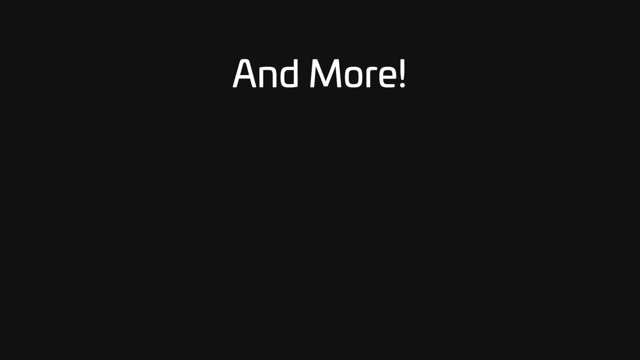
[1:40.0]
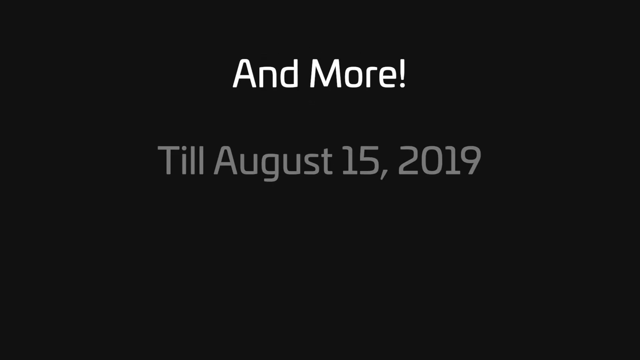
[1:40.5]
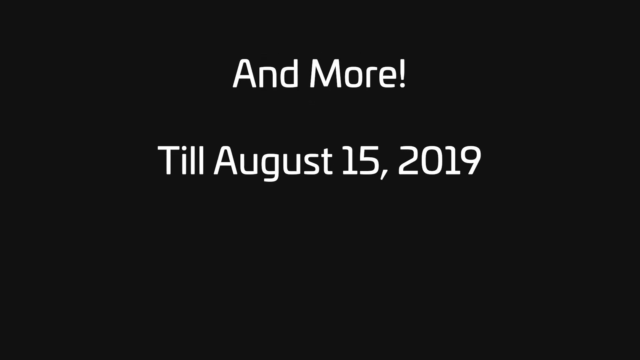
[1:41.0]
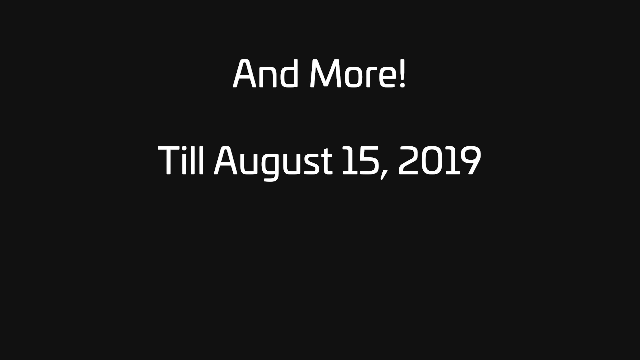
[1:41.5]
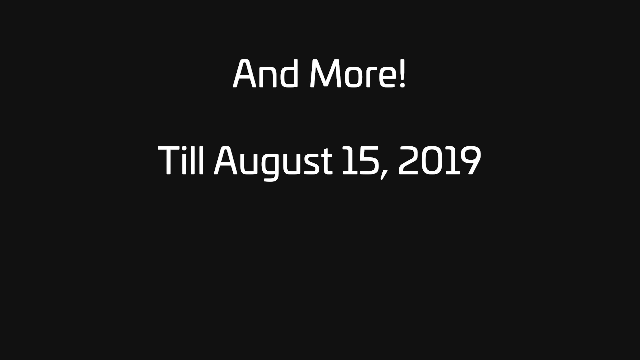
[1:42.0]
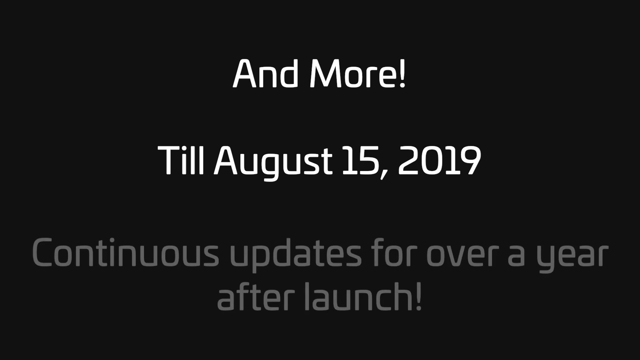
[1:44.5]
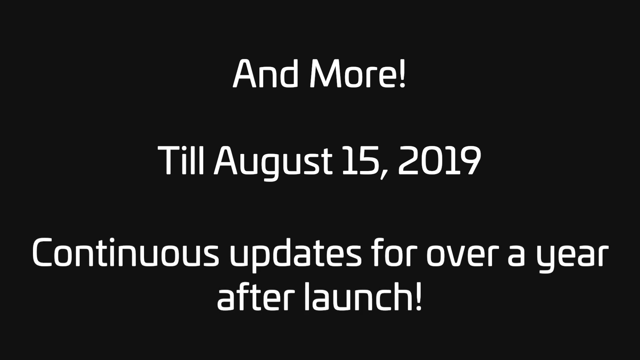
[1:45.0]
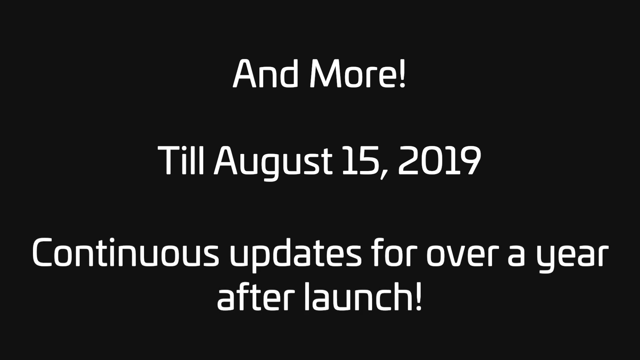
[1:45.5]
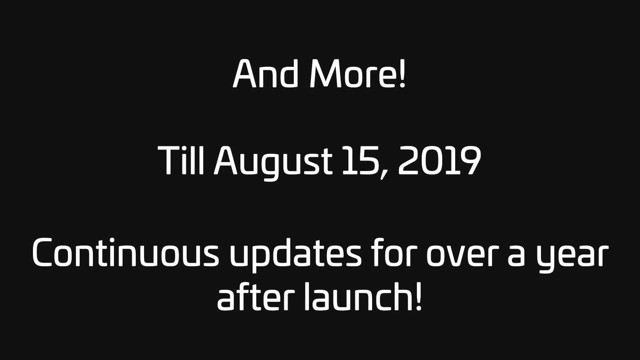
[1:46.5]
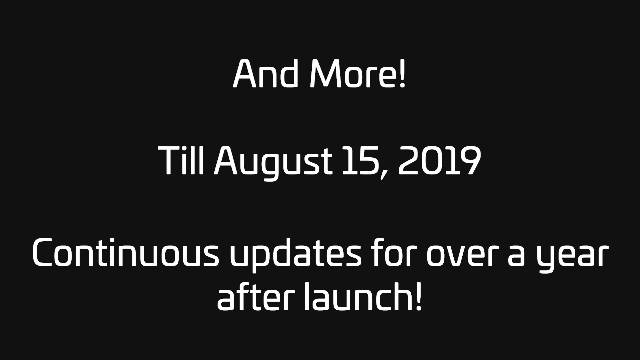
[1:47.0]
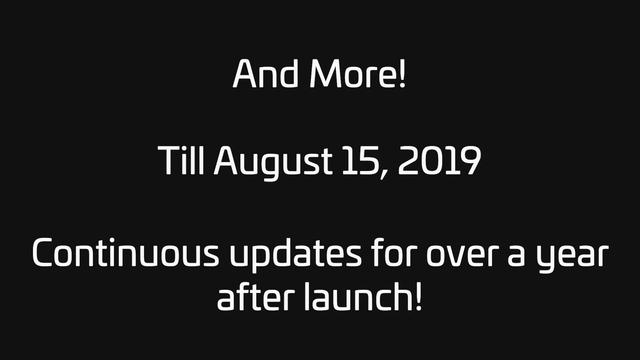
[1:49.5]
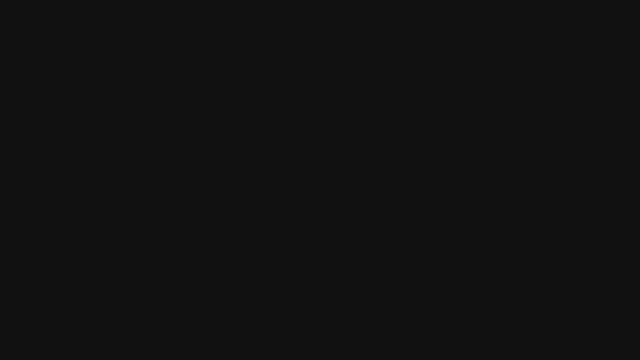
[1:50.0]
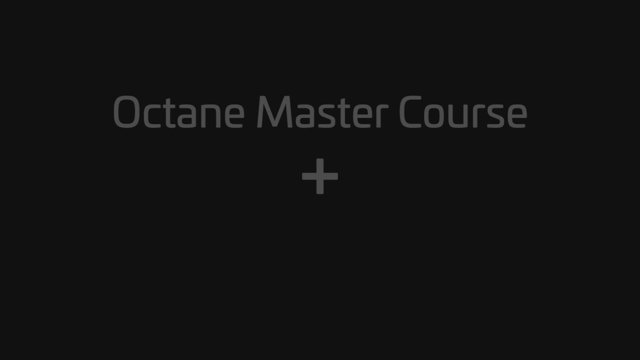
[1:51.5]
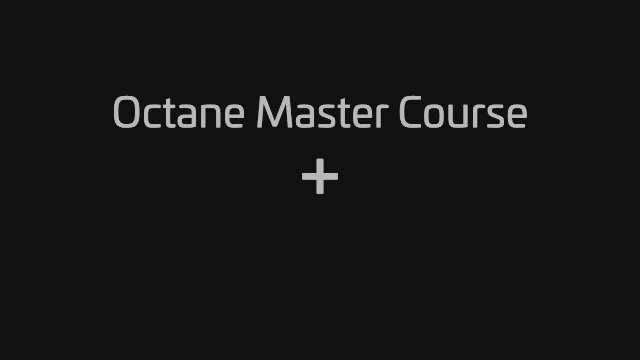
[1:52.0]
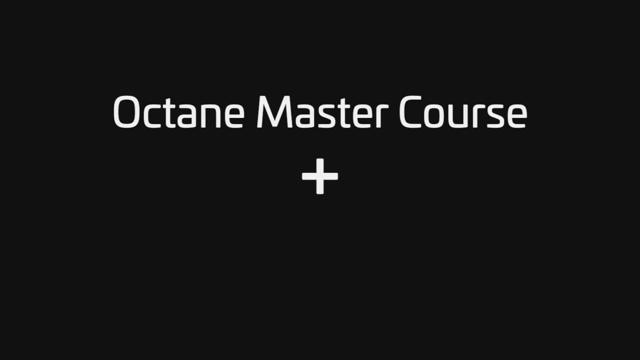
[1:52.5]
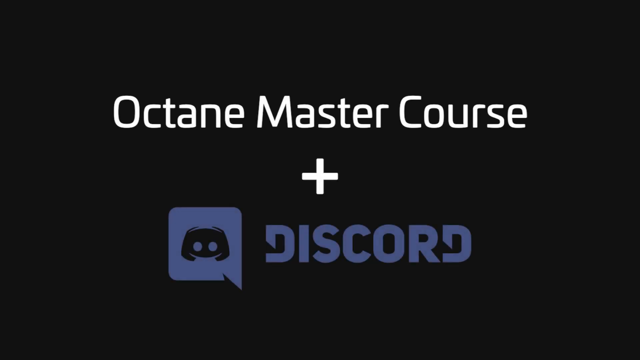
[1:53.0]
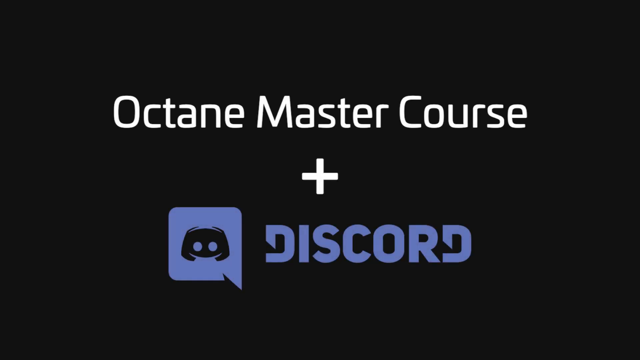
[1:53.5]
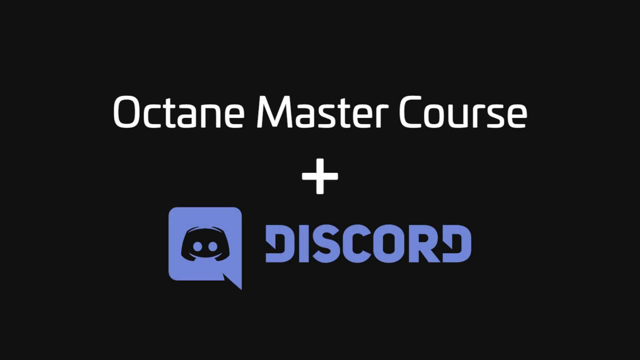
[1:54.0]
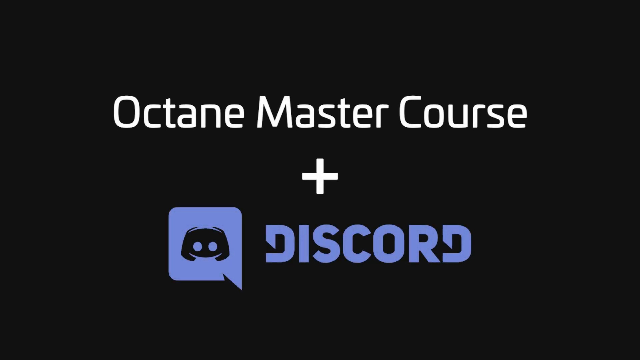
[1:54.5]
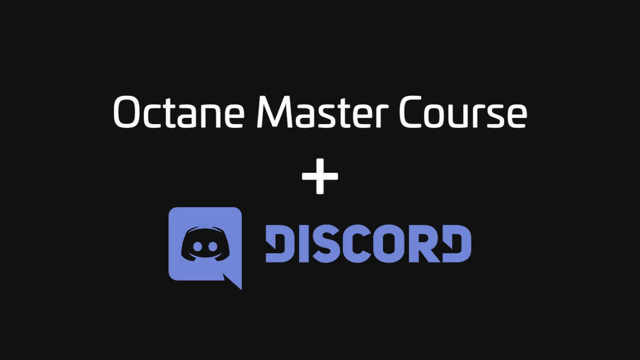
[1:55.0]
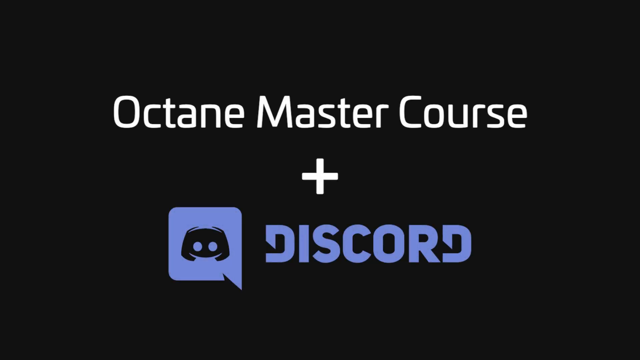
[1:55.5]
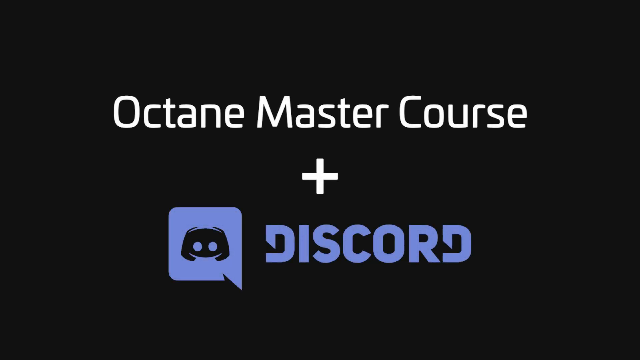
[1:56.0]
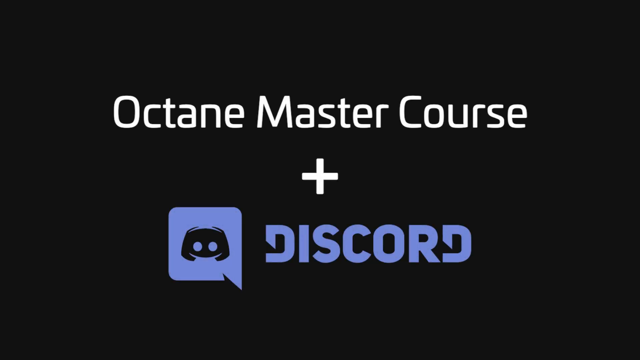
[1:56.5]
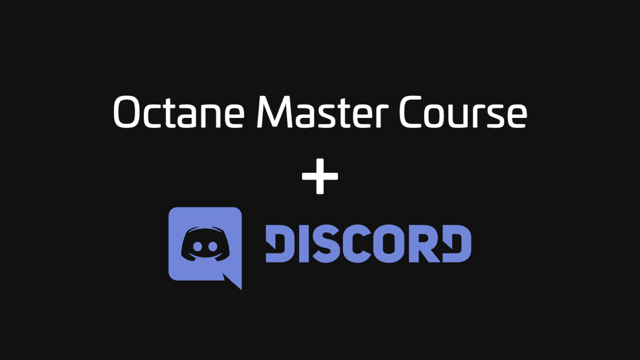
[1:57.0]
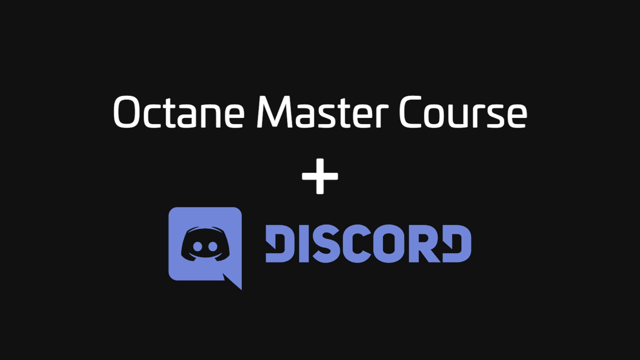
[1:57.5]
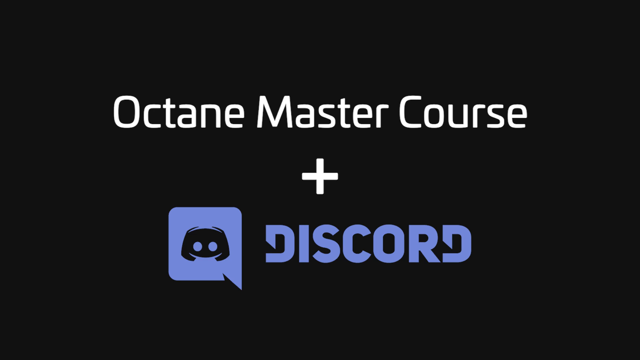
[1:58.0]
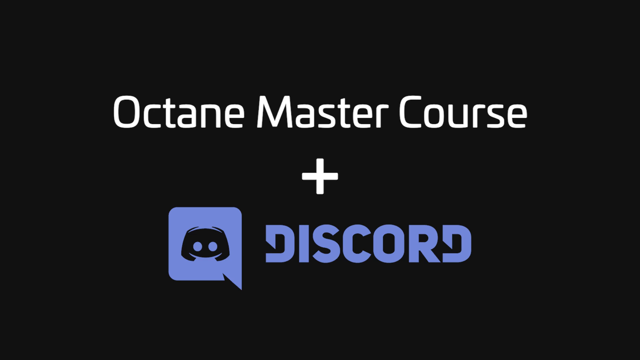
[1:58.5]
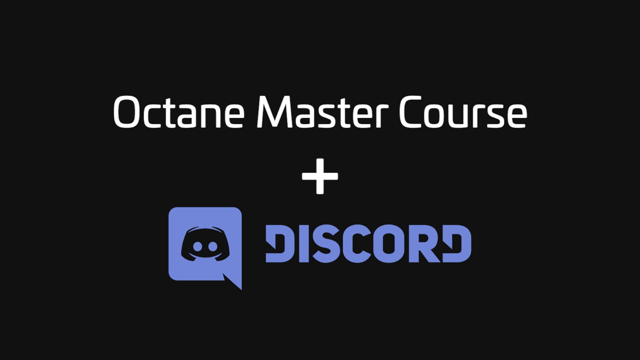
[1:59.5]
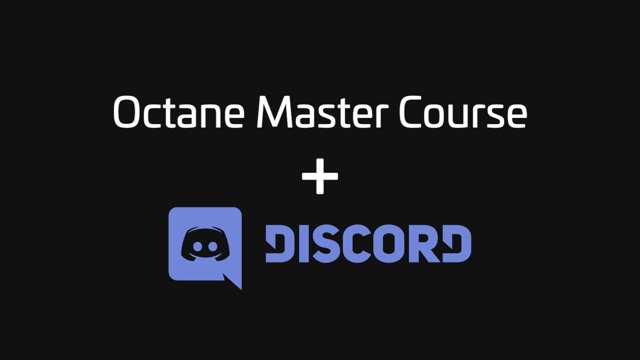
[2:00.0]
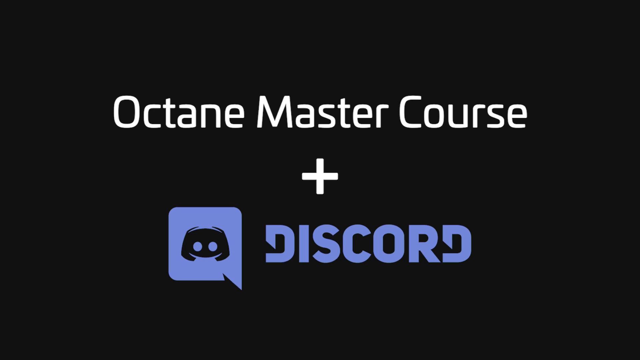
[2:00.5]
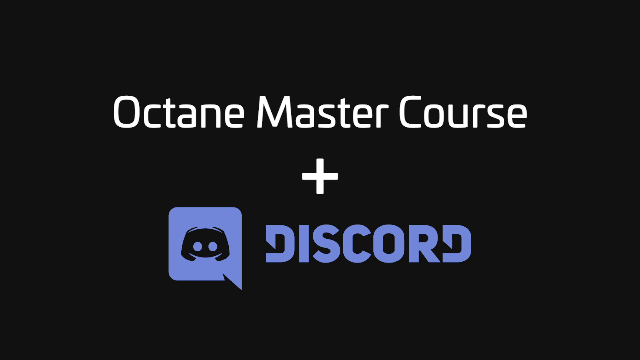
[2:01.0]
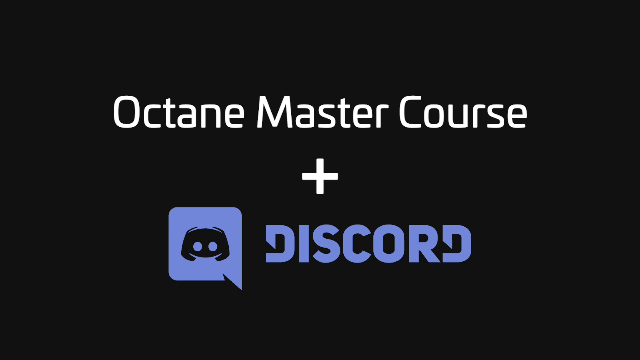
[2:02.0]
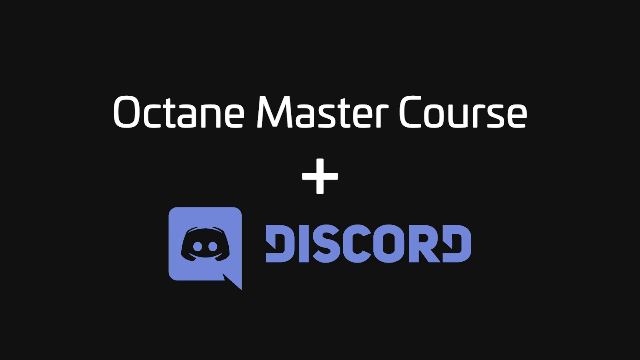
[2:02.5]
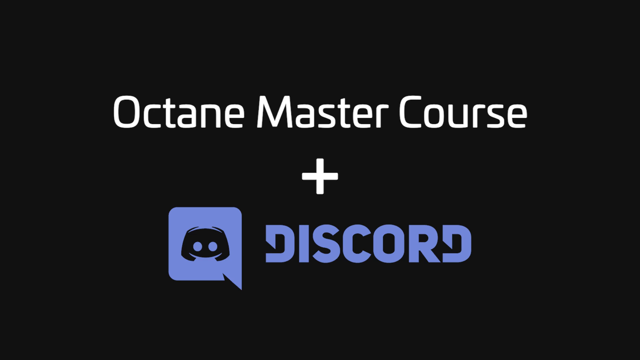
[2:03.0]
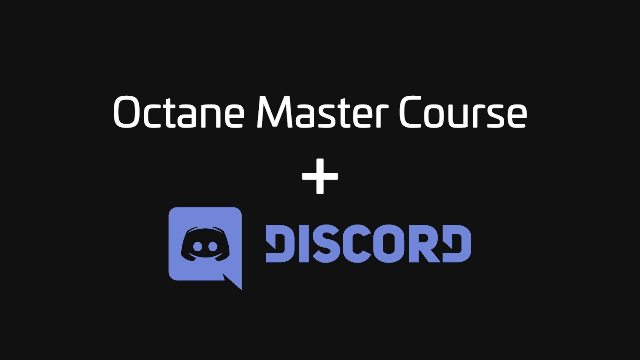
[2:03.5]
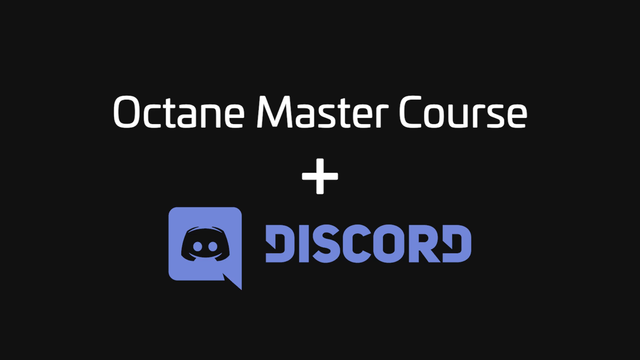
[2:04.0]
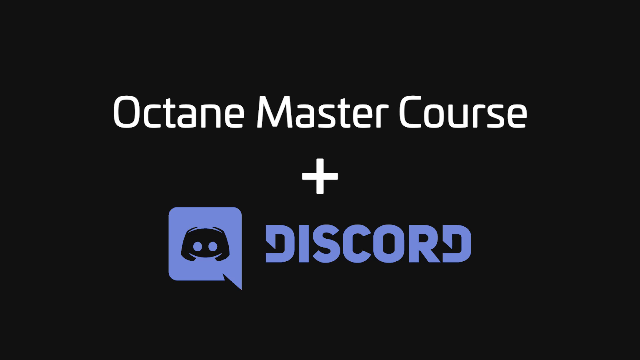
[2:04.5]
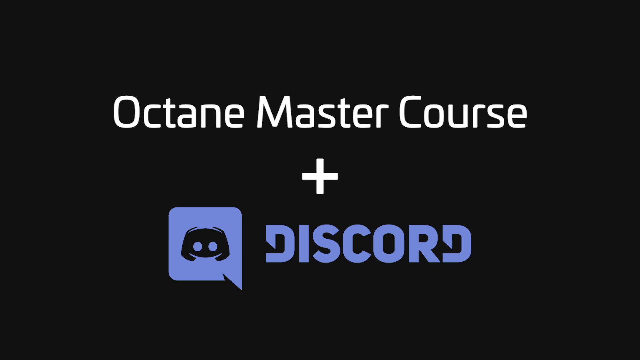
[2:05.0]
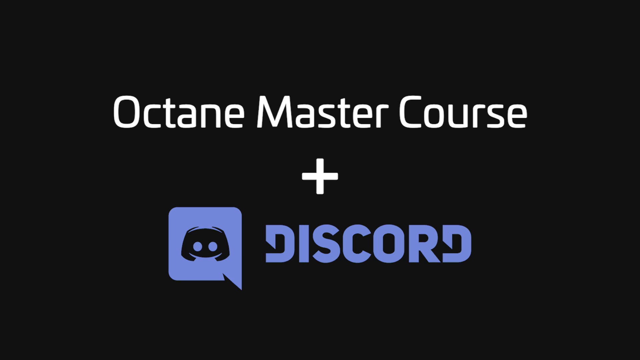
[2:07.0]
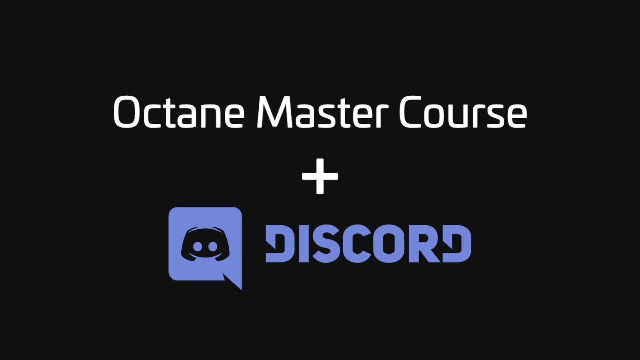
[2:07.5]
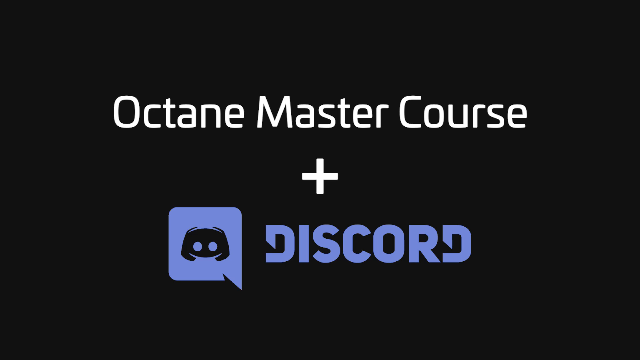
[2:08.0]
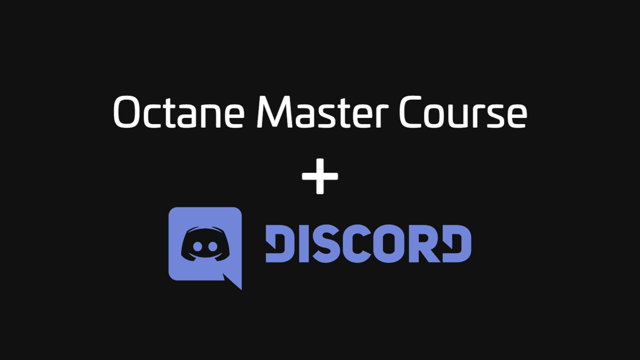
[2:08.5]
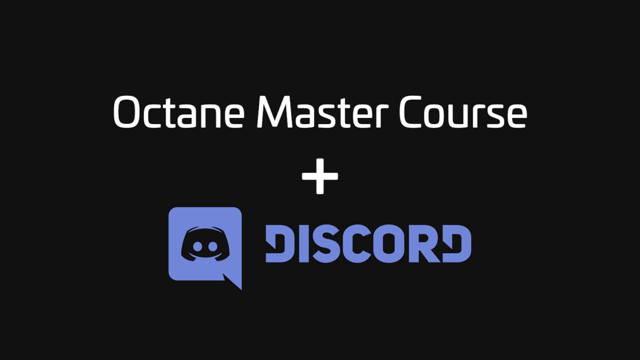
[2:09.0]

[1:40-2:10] On the dark gray background, "till August 15th 2019" appears underneath "and more". More white text then appears at the bottom, reading "continuous updates for over a year after launch". The screen turns fully dark gray, and the words "Octane Master Course" appear at the top with a plus symbol underneath, followed by the Discord logo below that. The word Discord is in the font used for the application, with the Discord speech-bubble logo to its left, all in Discord's usual purplish-blue color. The screen stays on this.